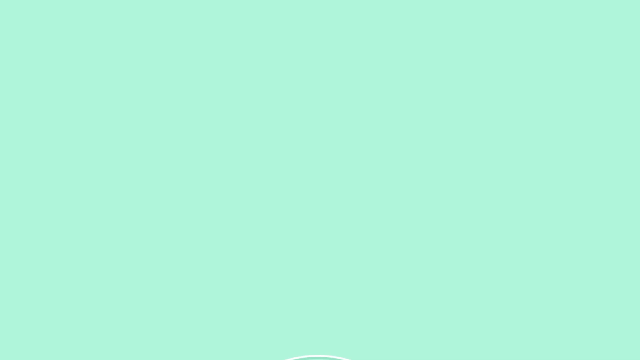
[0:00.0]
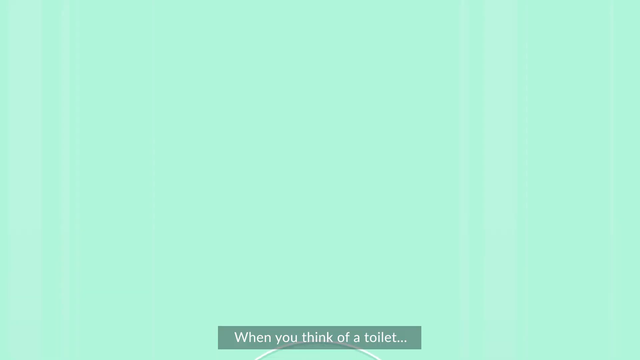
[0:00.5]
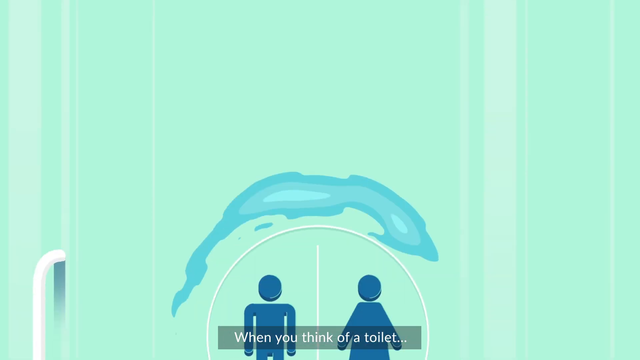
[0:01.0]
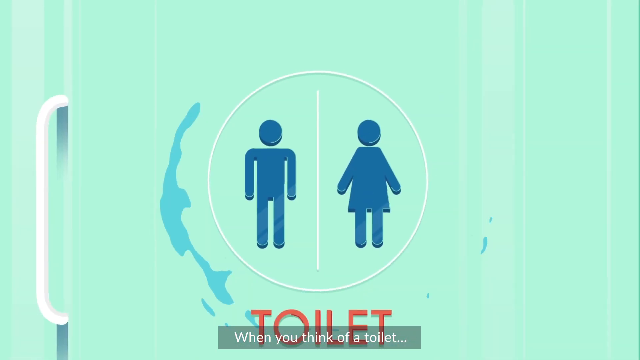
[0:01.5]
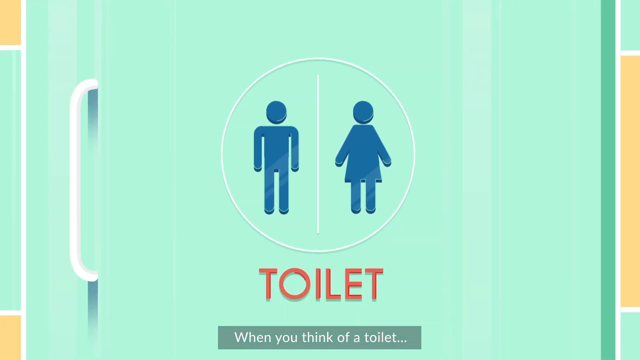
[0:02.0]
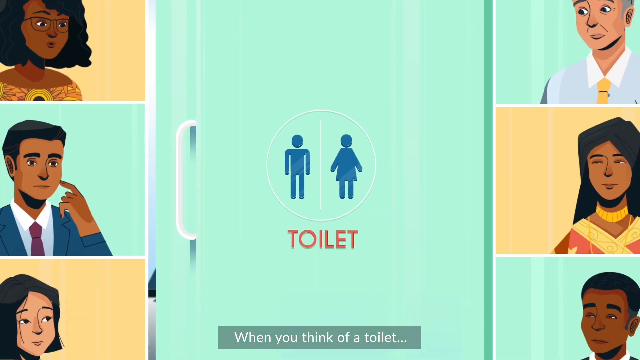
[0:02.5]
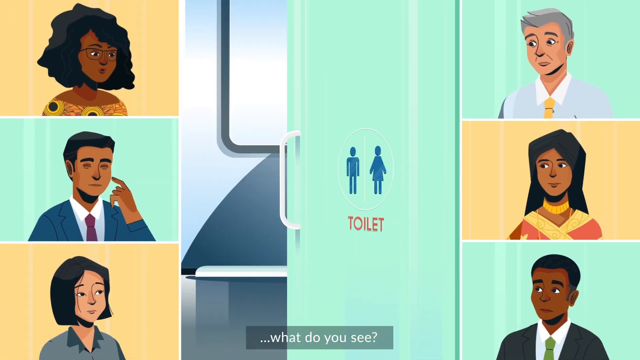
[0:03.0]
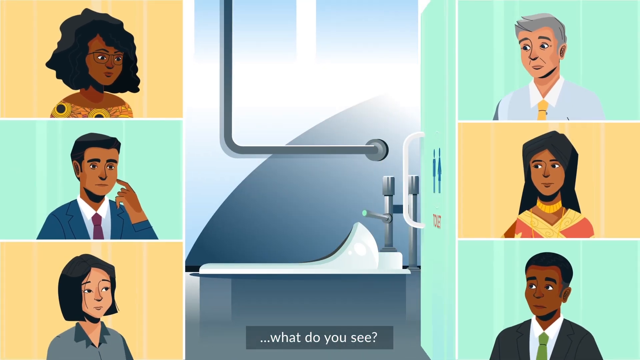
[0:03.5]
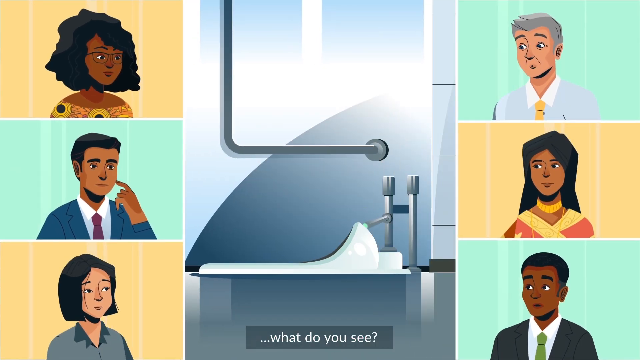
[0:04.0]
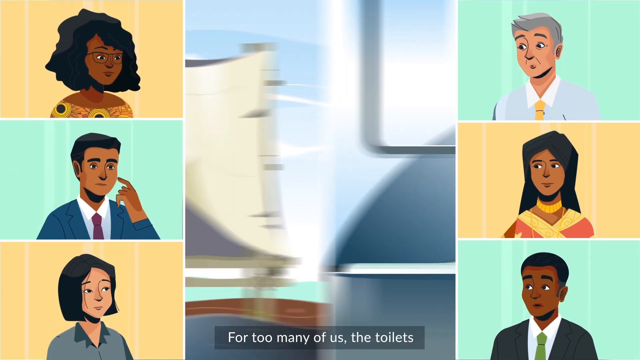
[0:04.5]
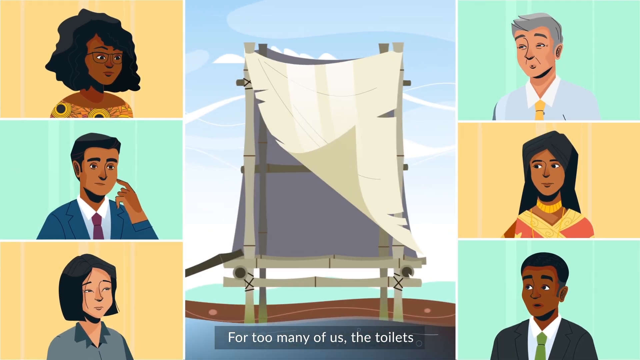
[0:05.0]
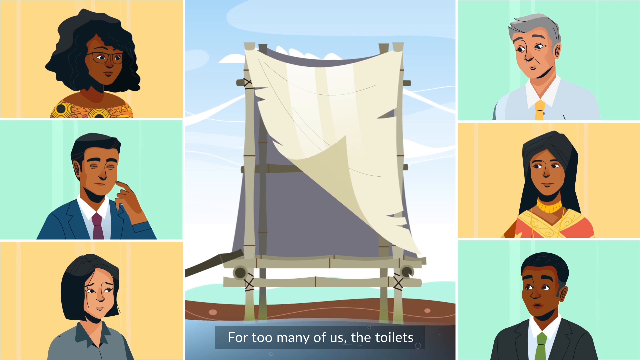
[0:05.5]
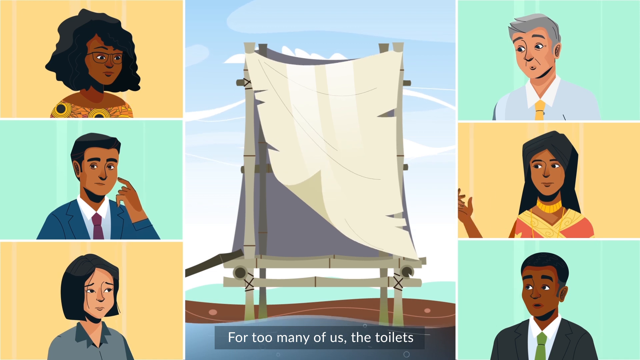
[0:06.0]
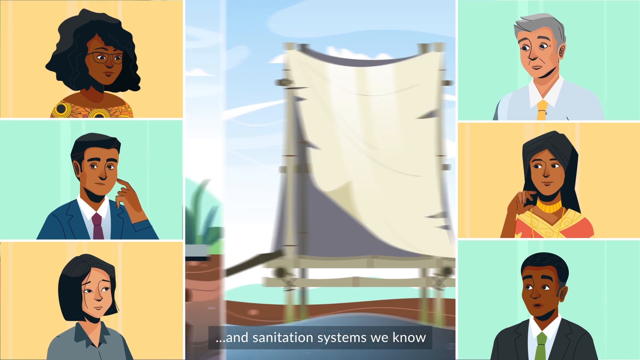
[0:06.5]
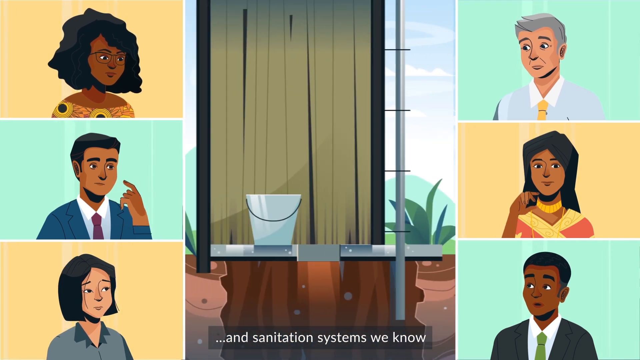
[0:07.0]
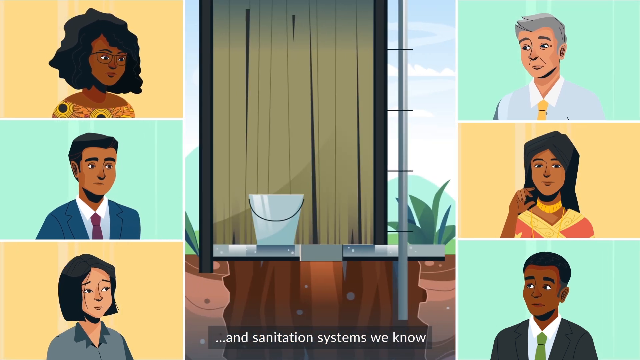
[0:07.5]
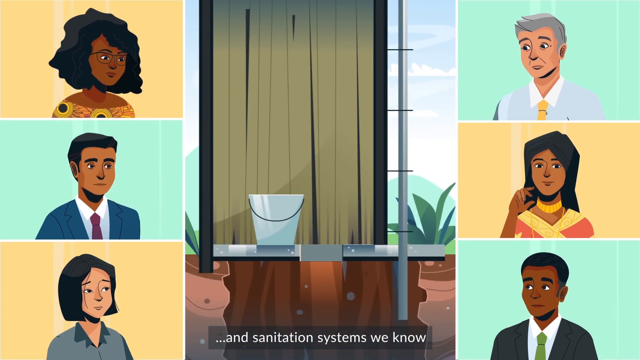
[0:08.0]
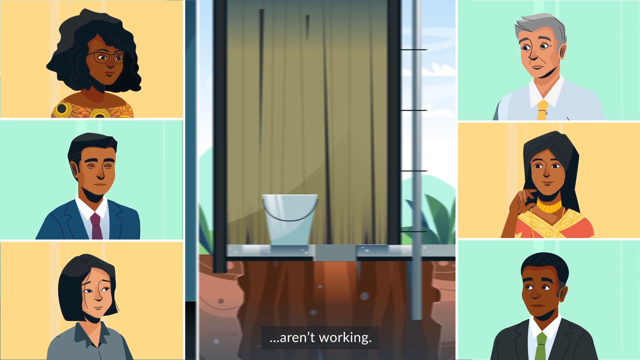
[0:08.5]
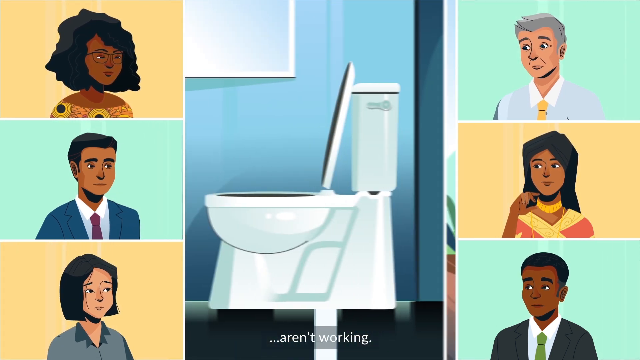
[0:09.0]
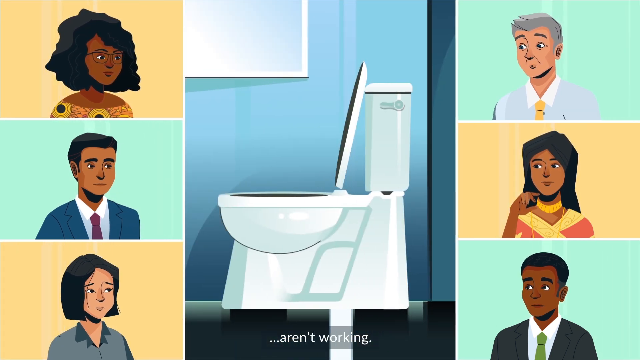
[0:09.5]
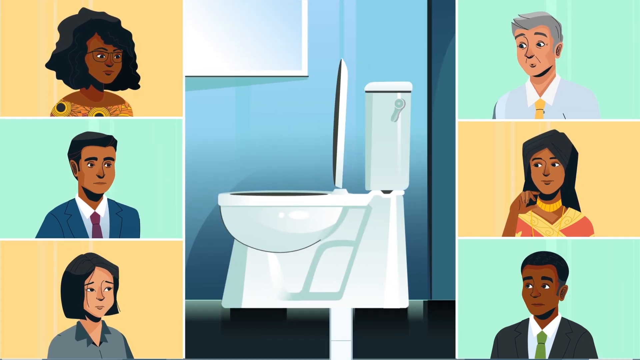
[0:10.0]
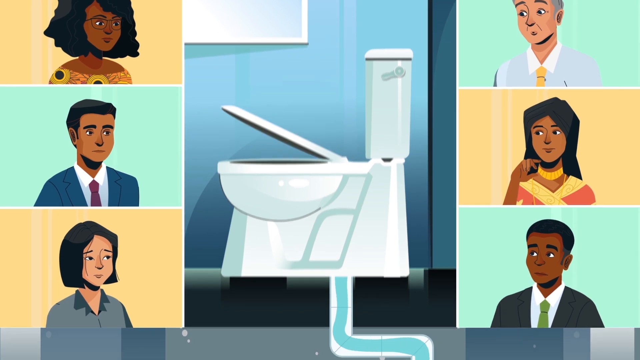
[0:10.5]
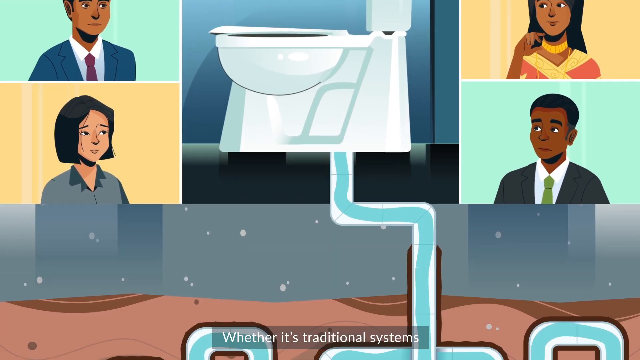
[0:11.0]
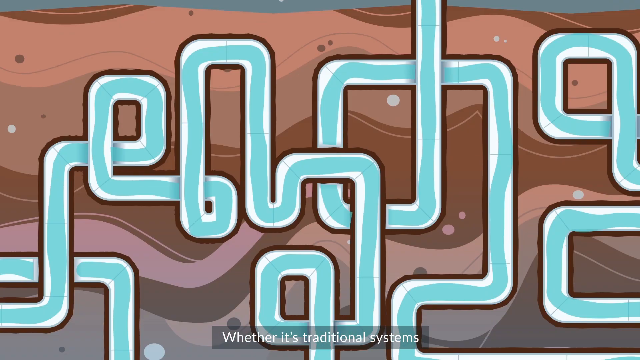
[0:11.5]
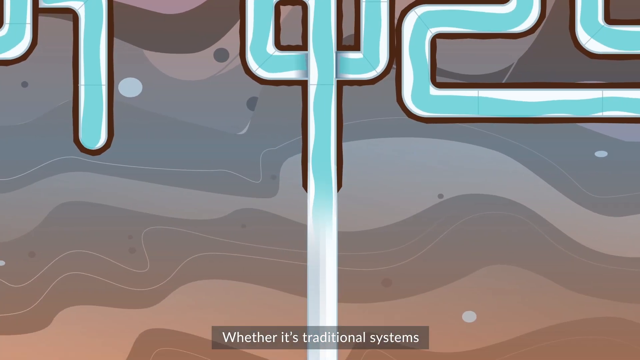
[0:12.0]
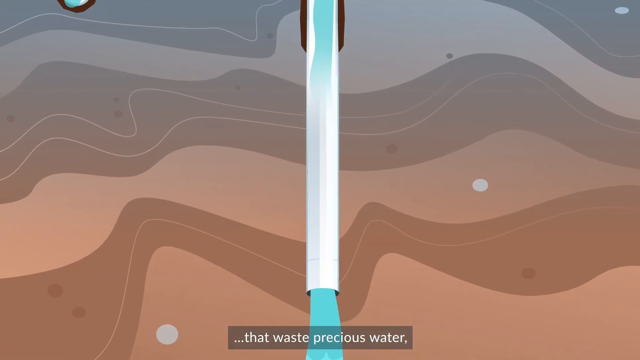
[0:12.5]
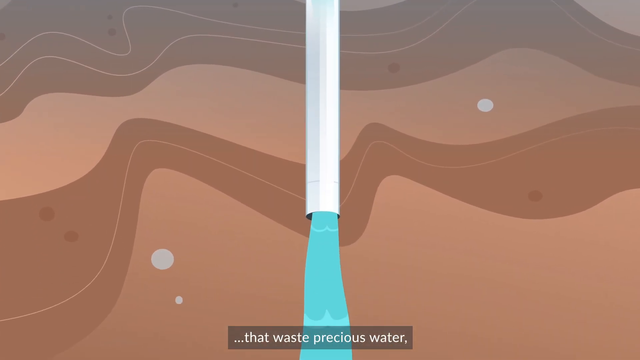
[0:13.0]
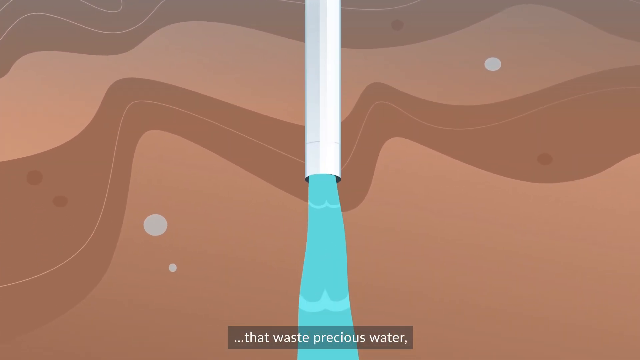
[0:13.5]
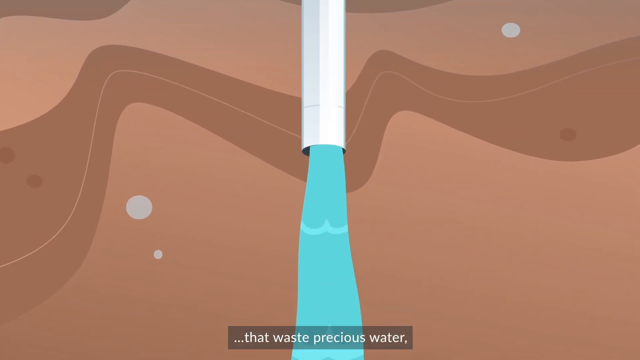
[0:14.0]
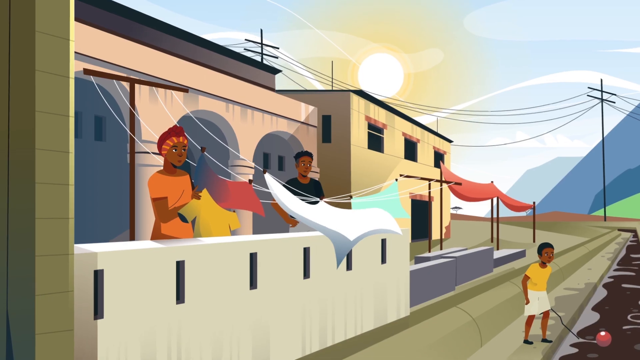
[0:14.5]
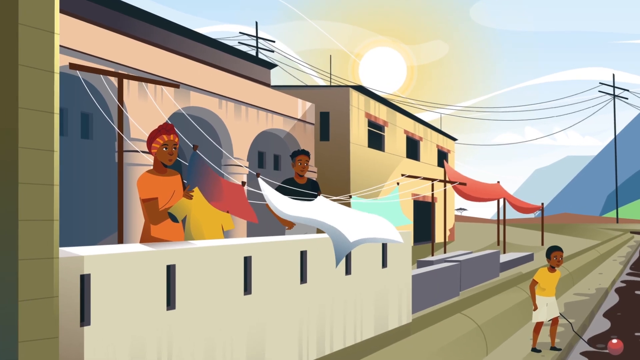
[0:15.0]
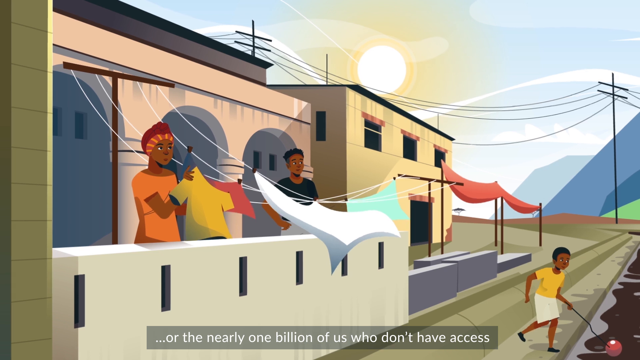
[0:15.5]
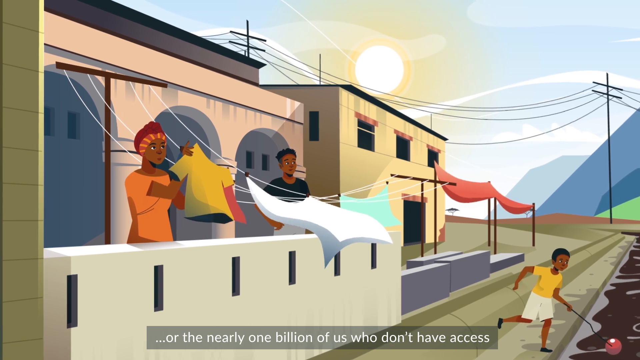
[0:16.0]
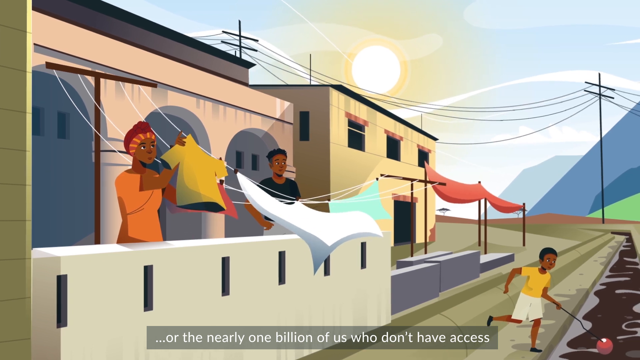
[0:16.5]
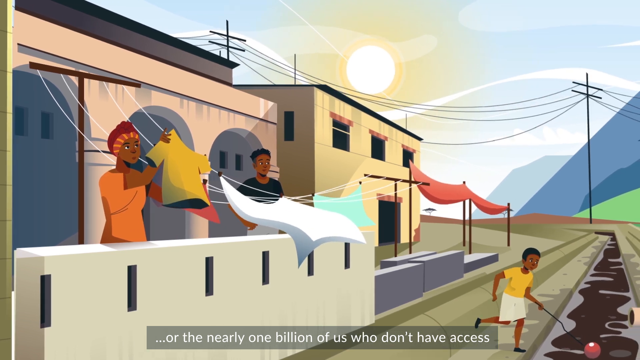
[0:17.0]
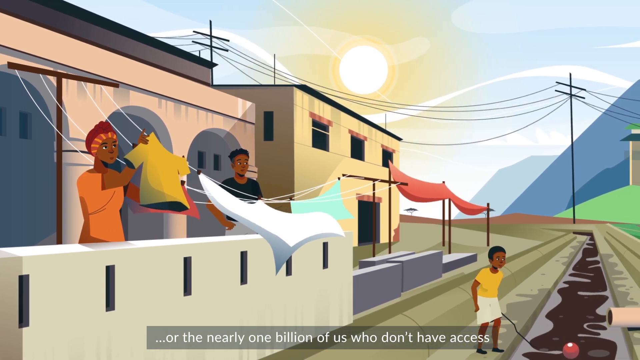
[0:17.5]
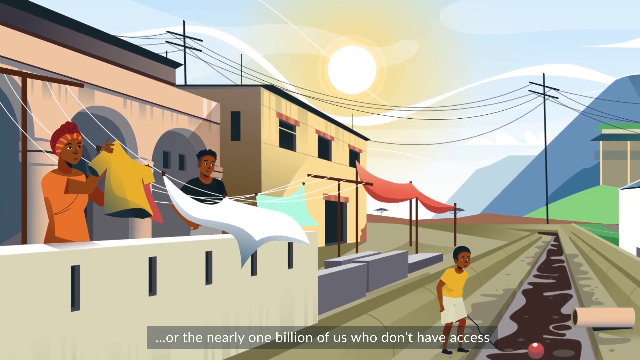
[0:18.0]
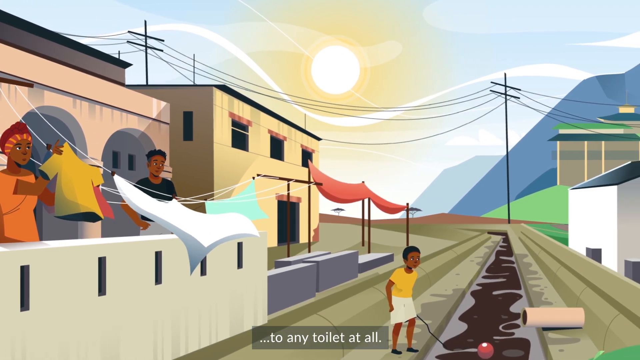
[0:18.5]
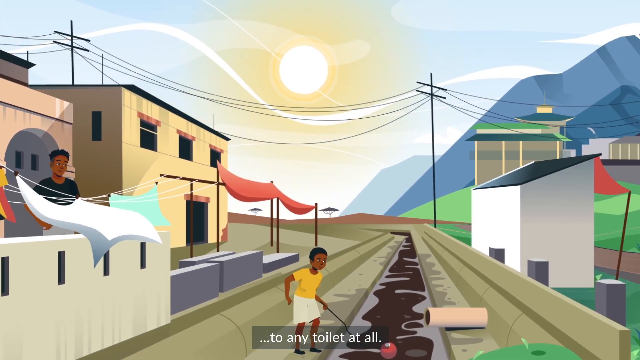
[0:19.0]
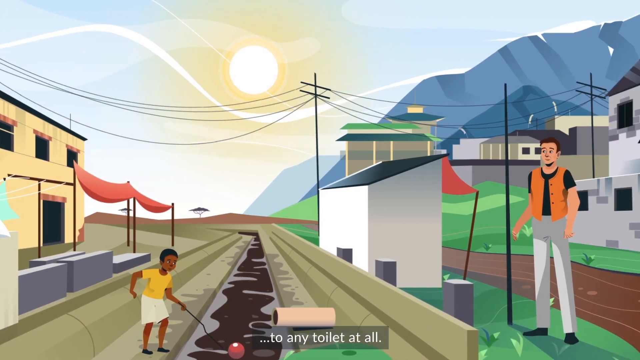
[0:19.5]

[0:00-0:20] Different types of people appear. A toilet is shown, including its inside, and then a chamber showing how the water or waste goes down. A kid plays in the mud, which is possibly sewage, and a child's poo is in the sewage.